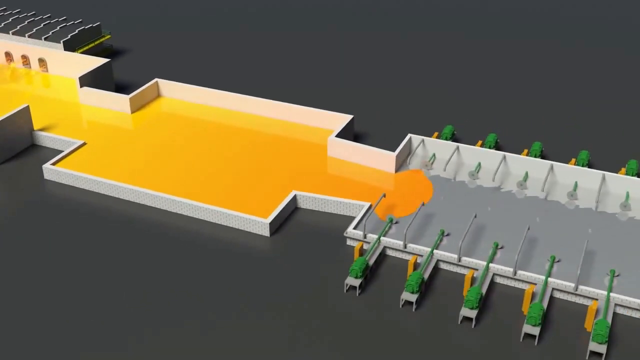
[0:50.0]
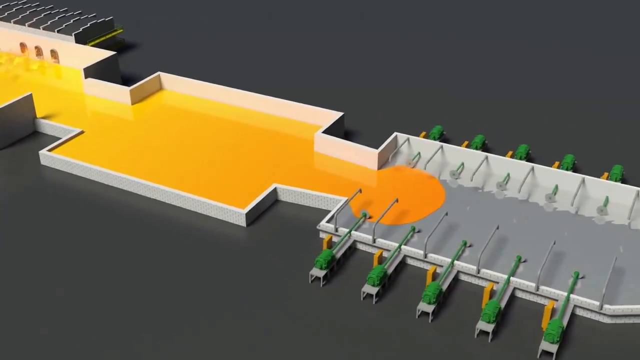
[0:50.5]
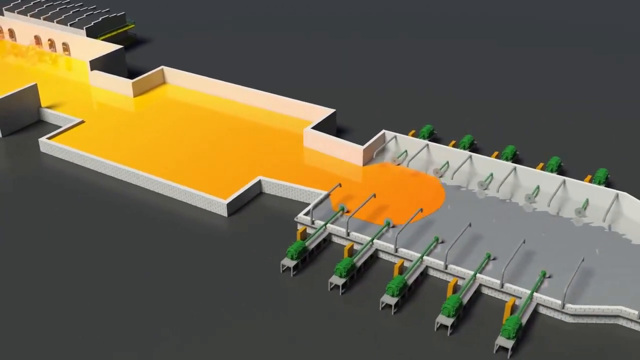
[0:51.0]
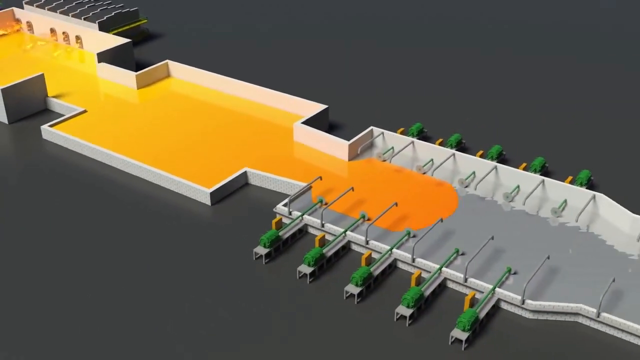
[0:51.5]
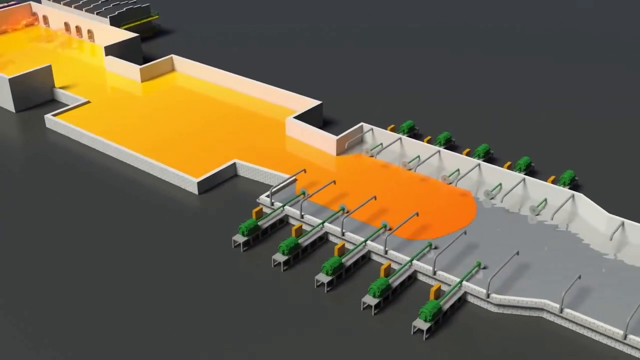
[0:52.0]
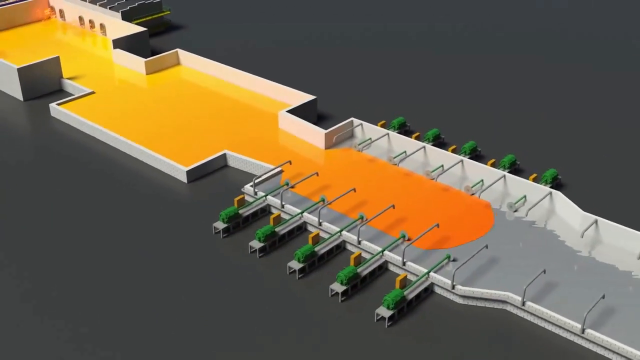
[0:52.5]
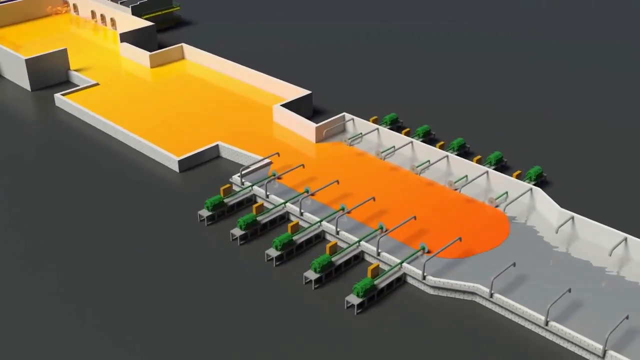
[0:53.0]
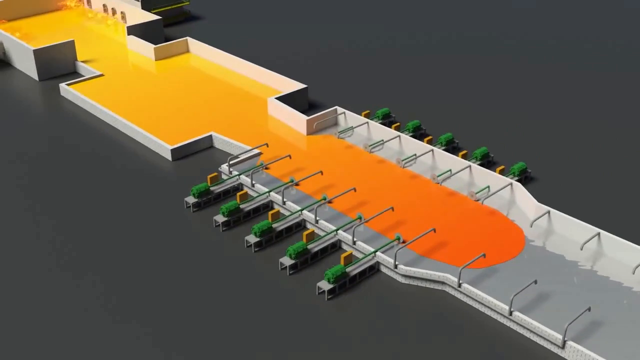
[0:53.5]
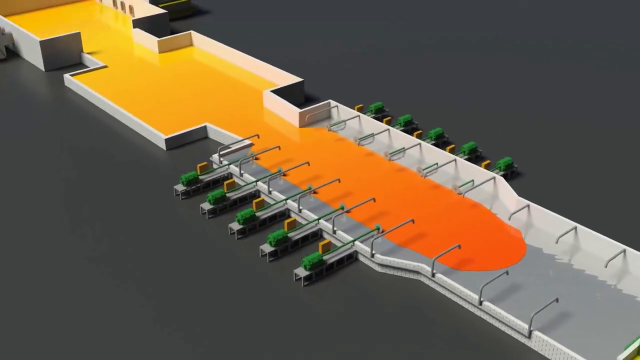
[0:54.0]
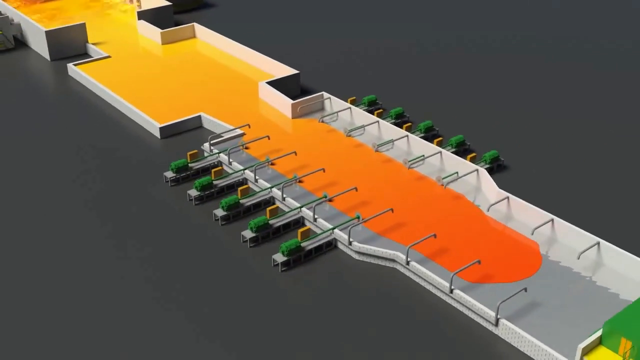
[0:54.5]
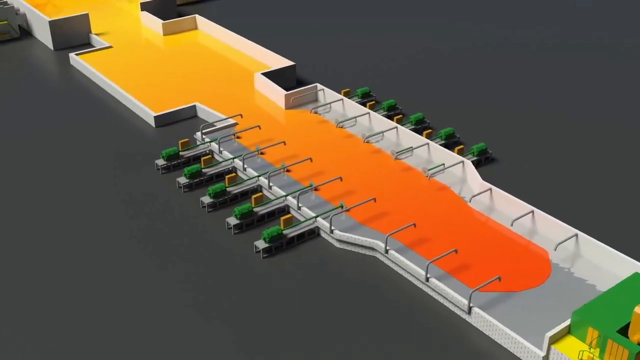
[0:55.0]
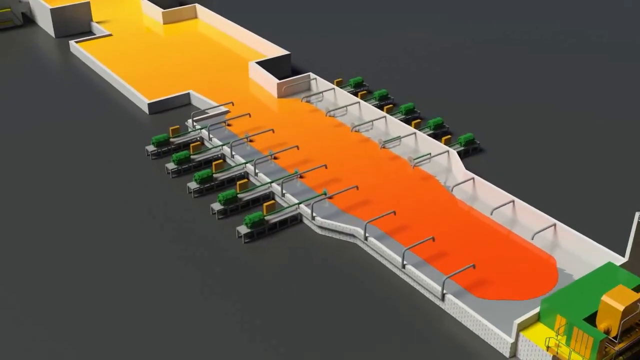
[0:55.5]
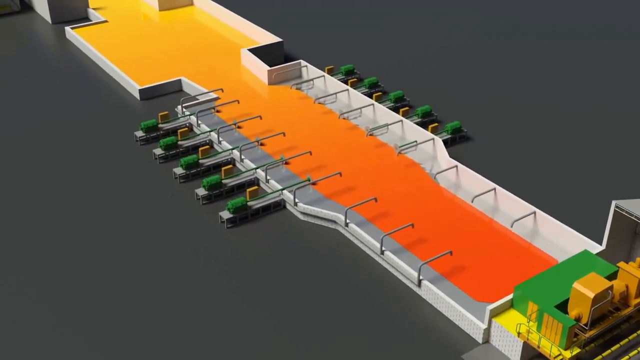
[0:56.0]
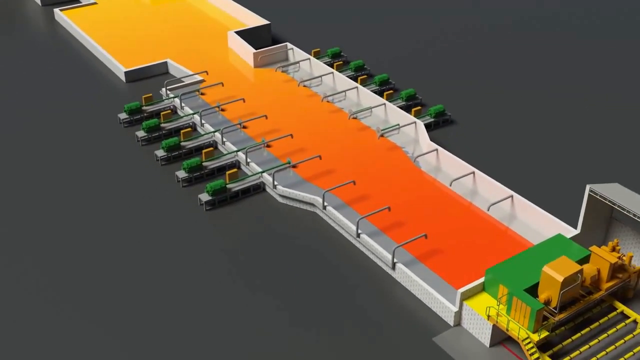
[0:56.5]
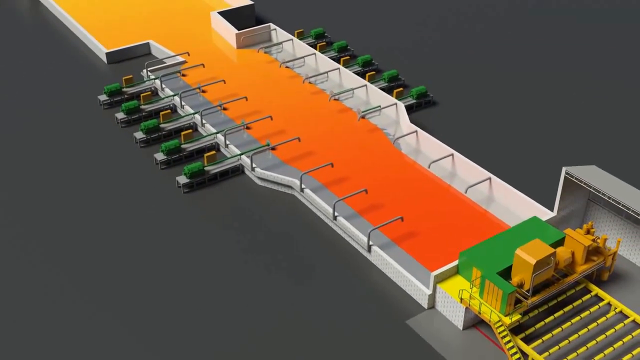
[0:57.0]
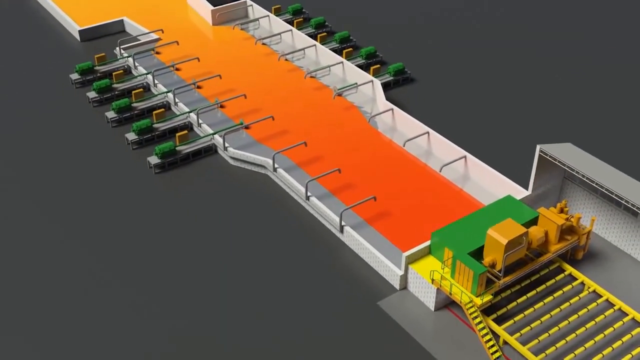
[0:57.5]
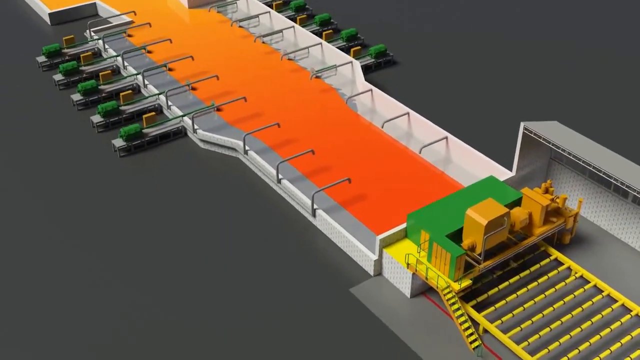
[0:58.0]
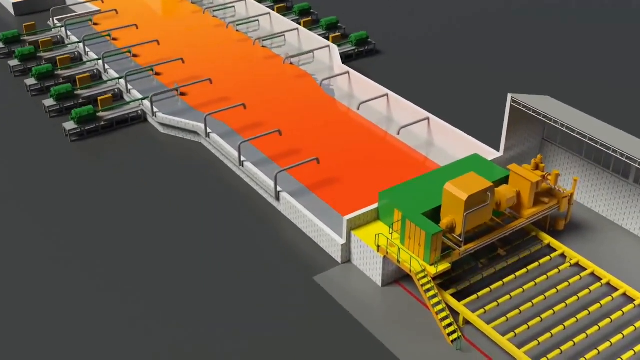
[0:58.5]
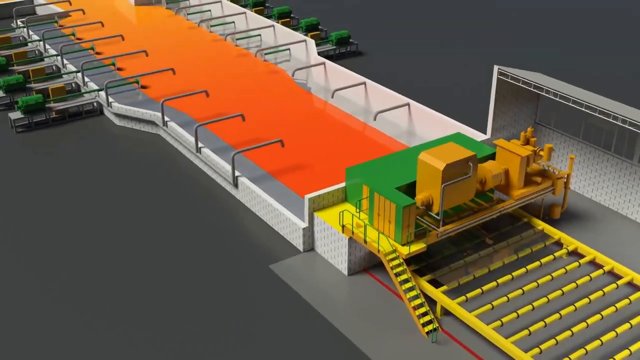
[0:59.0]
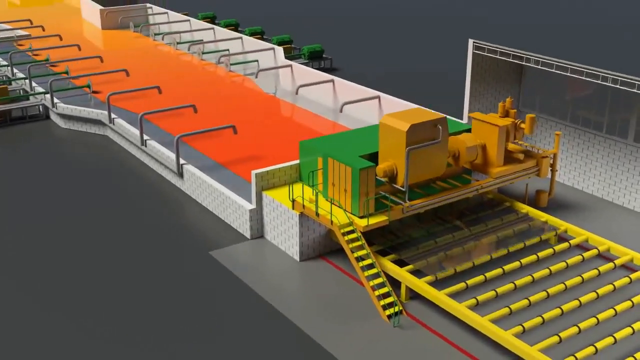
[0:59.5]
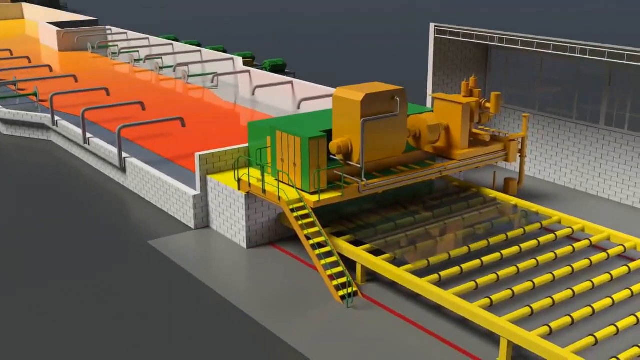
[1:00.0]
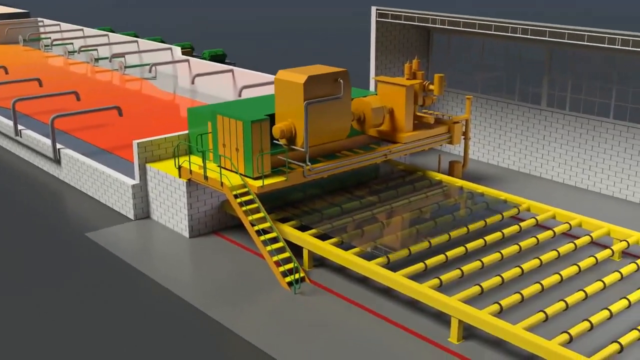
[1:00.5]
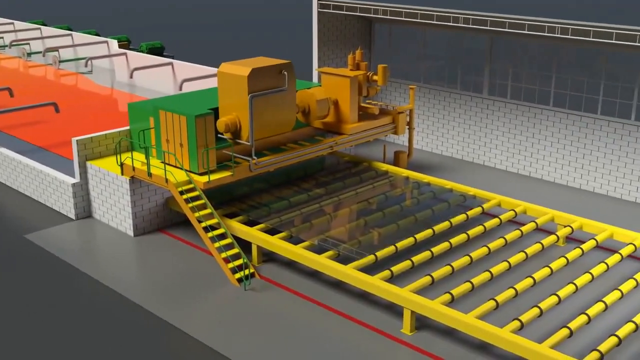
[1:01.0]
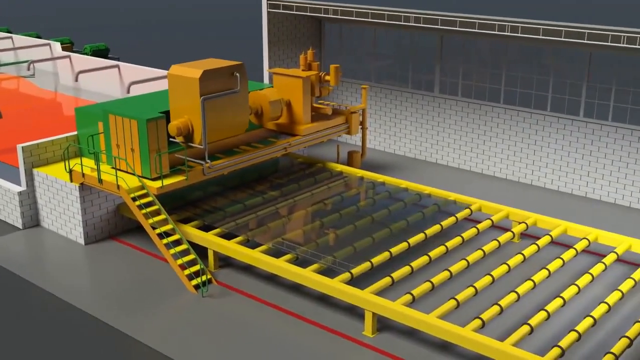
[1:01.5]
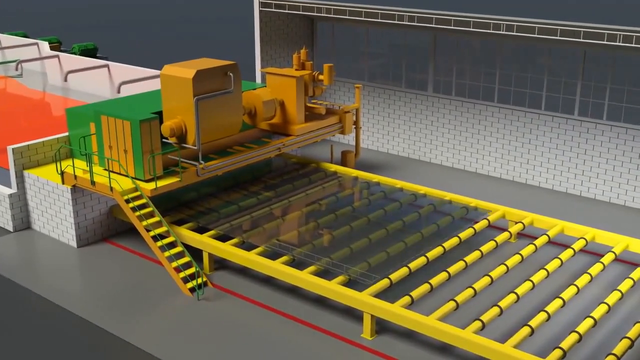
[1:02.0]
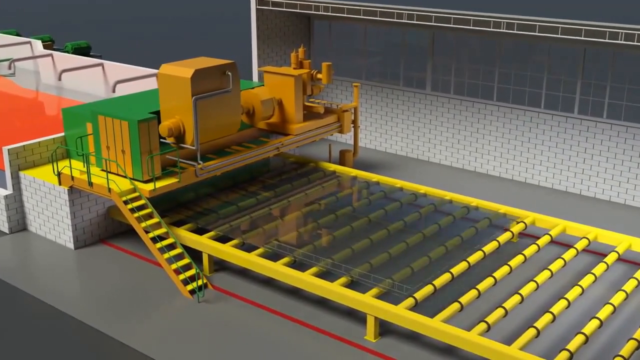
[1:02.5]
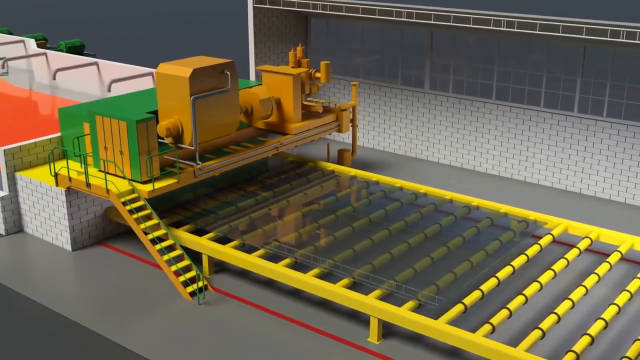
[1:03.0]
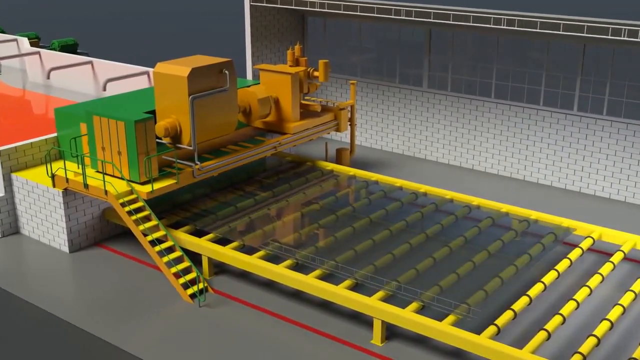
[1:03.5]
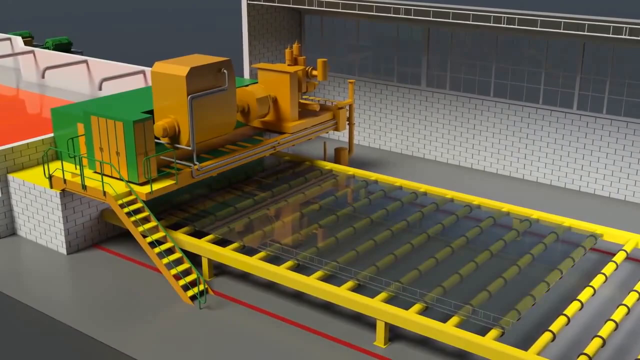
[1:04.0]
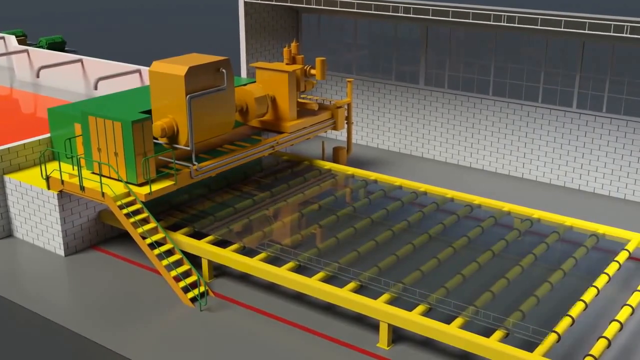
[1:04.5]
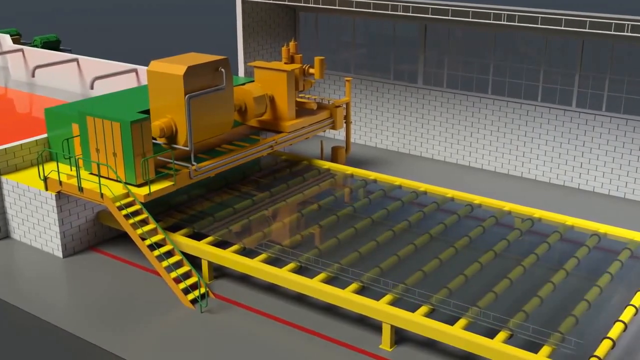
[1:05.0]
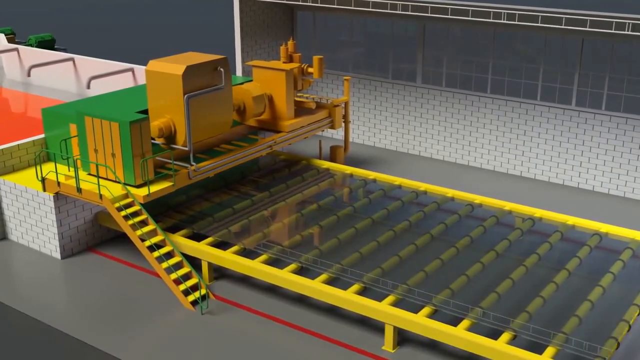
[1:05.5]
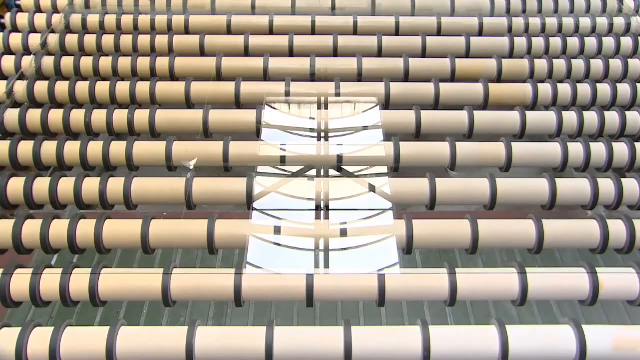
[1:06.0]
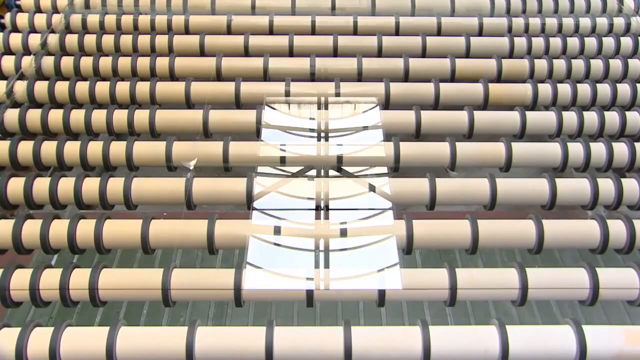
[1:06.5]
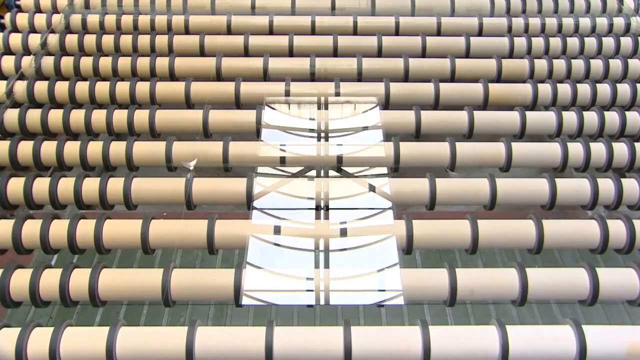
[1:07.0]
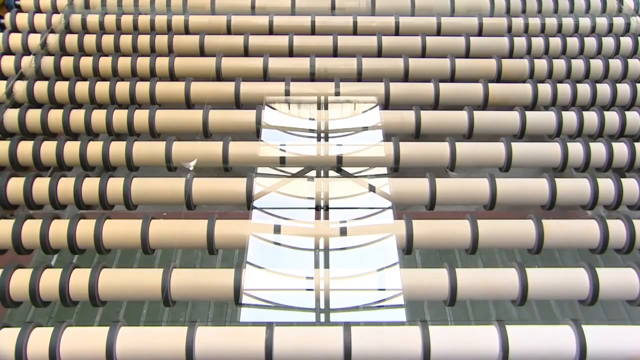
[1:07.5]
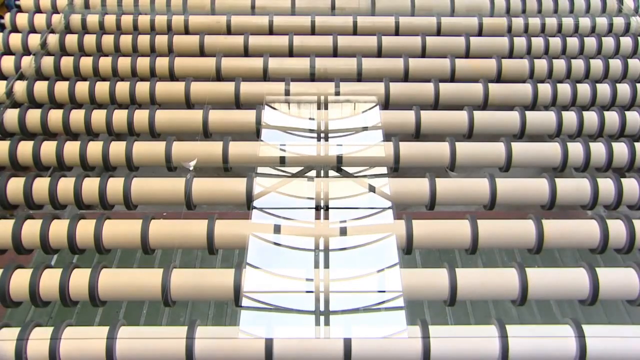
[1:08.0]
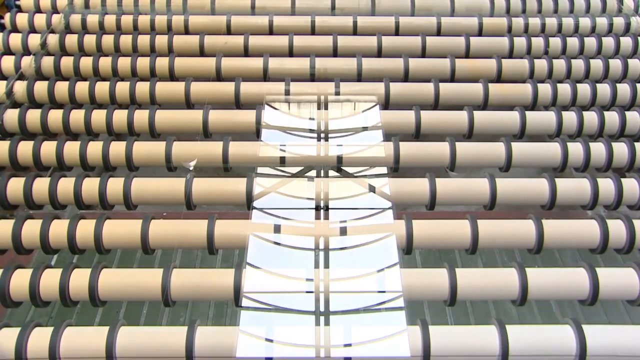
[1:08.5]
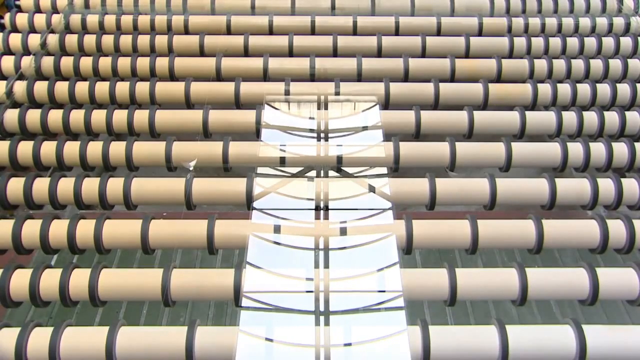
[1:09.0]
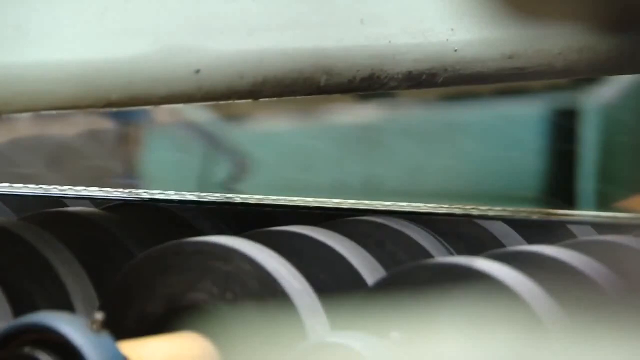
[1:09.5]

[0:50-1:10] The 3D image of the industrial factory machinery shows a yellow liquid leaking into various chambers and compartments of the model. There are barrels and spouts on the left and right sides of these rooms. The liquid is met by a yellow compartment with yellow and black lining around it, with more industrial machinery at the top, and the liquid turns into a black film. The video transitions to another 3D model of piping, then to real-life footage of the machinery at work: rolling metallic machinery rolls metal sheets from above and below. The detailed diagrams reflect the footage shown afterward. Many circular, silver-colored metal rollers roll the metal forward, with many of them underneath.